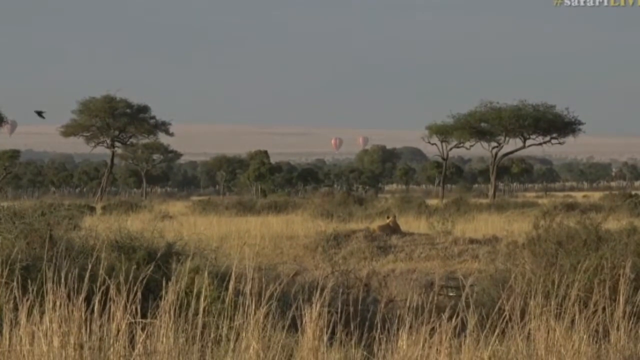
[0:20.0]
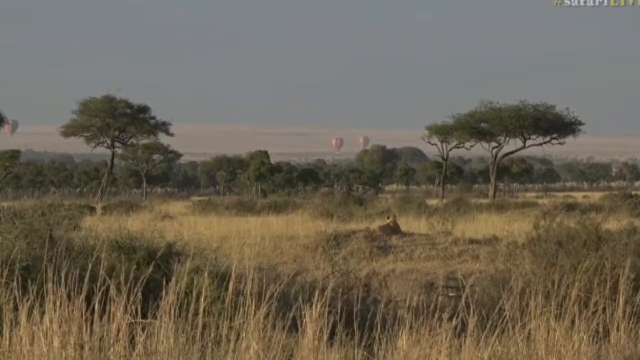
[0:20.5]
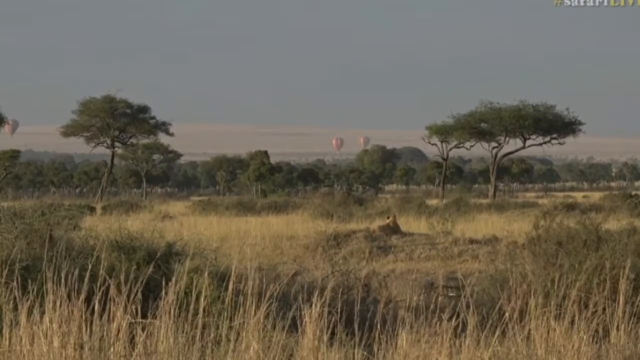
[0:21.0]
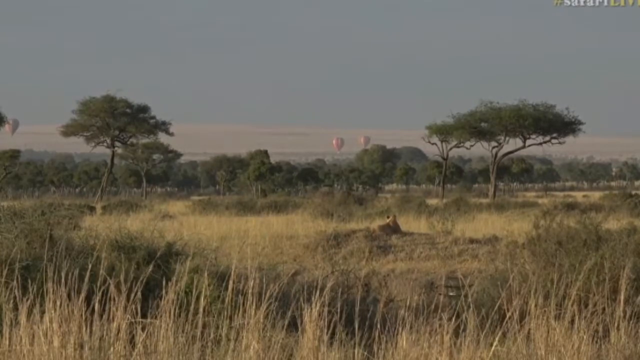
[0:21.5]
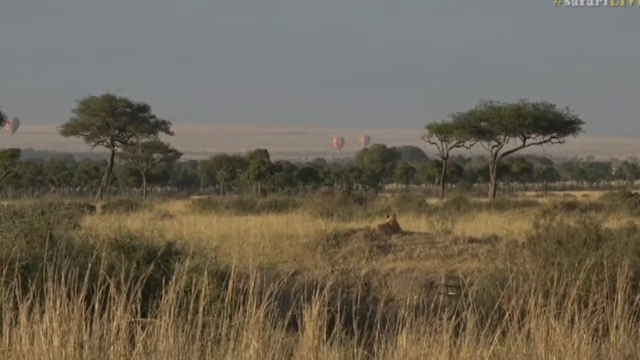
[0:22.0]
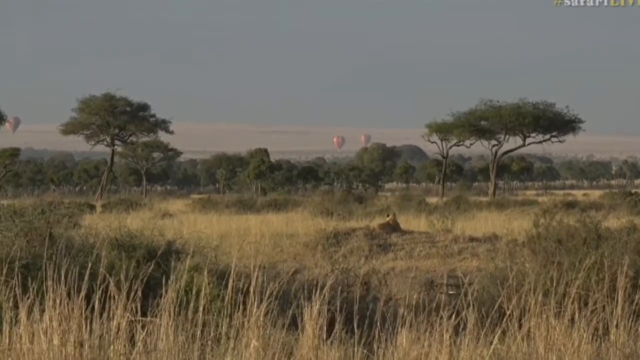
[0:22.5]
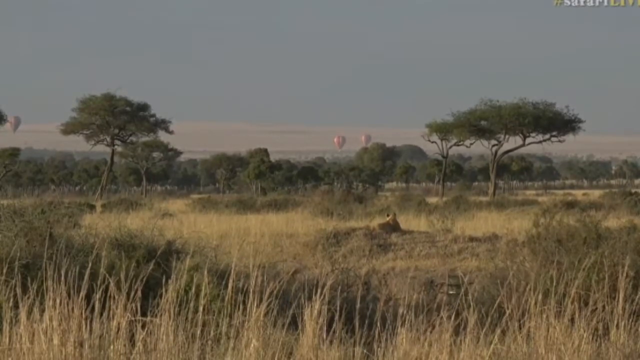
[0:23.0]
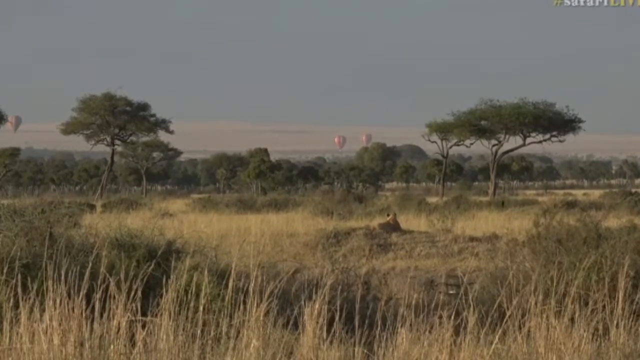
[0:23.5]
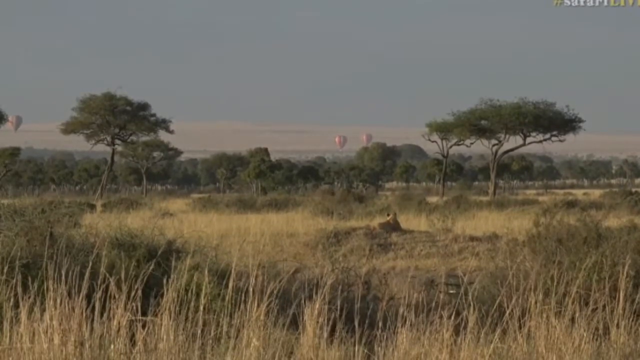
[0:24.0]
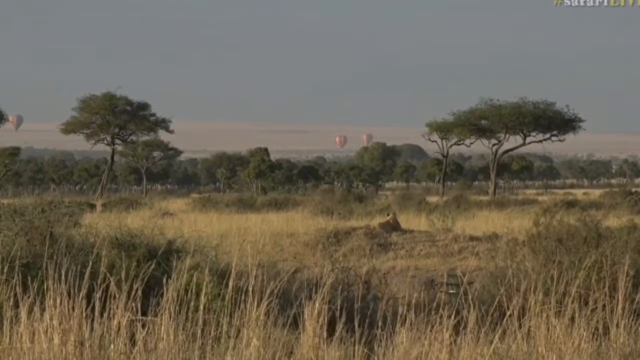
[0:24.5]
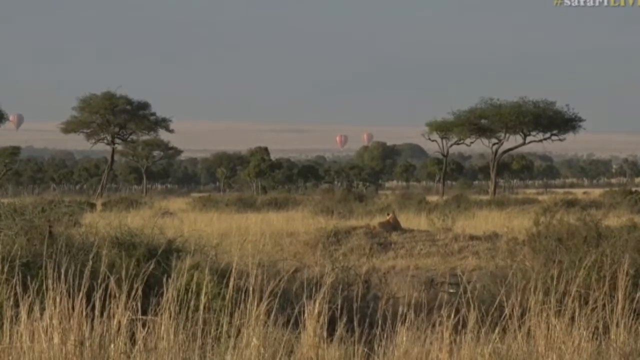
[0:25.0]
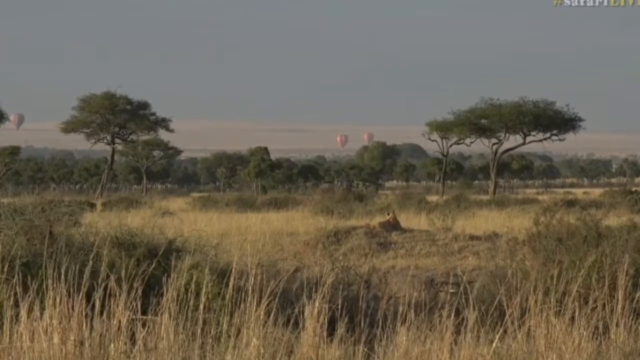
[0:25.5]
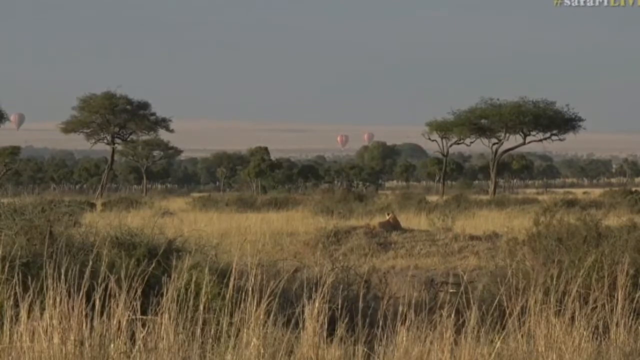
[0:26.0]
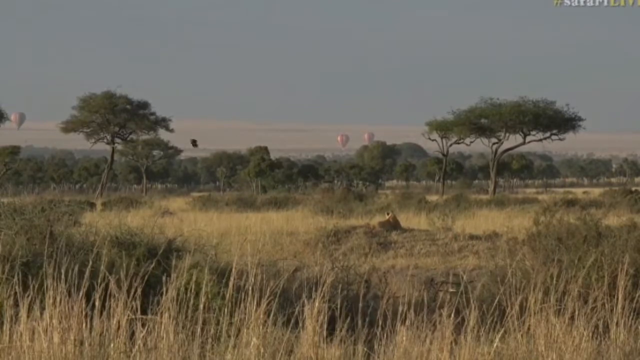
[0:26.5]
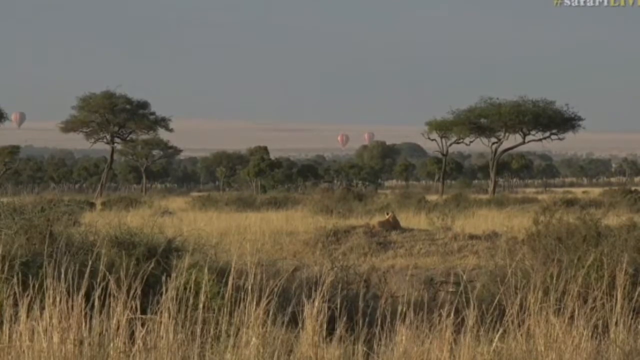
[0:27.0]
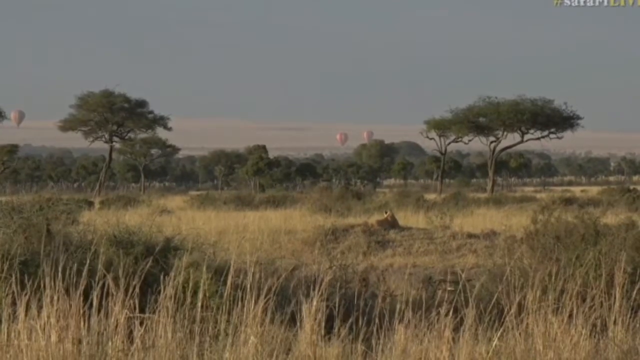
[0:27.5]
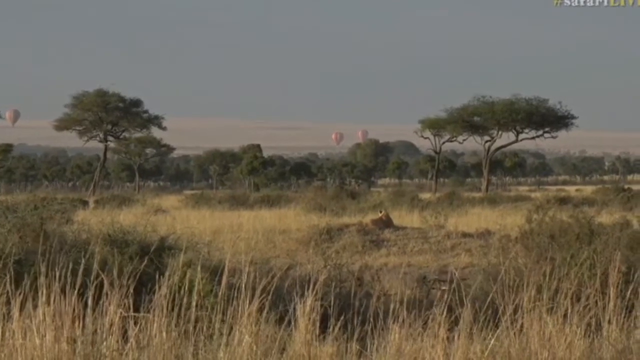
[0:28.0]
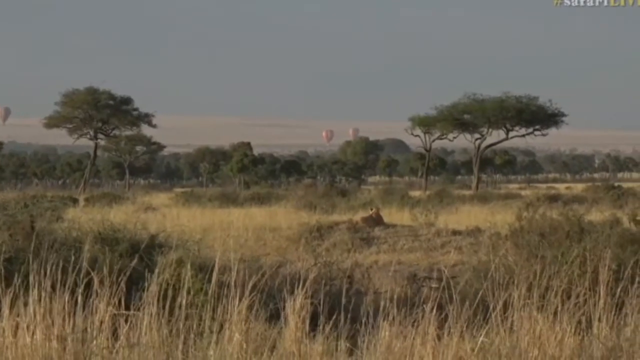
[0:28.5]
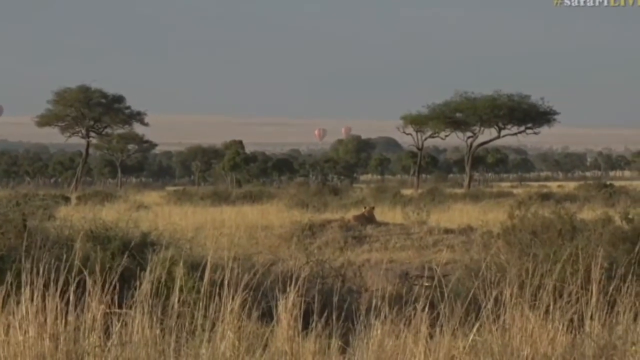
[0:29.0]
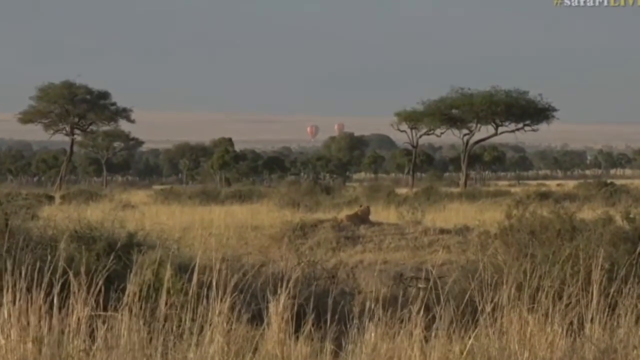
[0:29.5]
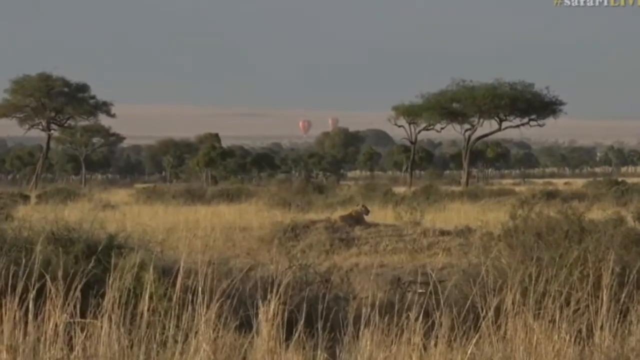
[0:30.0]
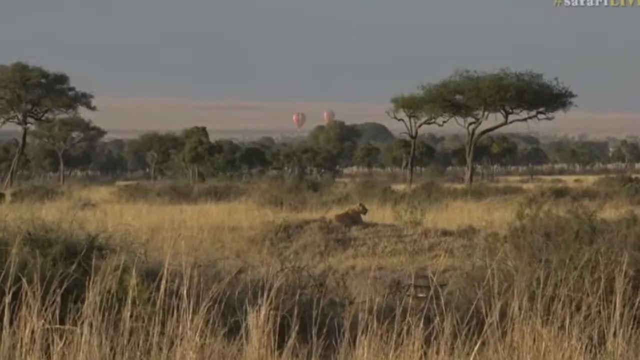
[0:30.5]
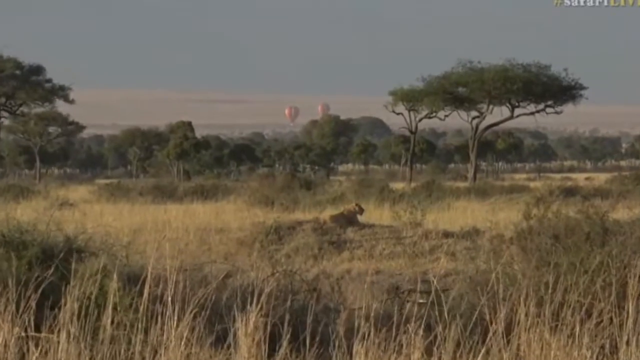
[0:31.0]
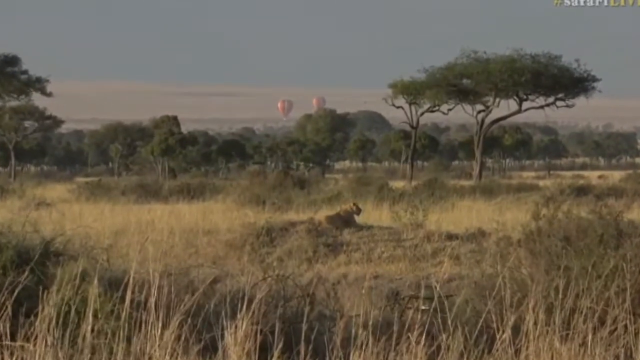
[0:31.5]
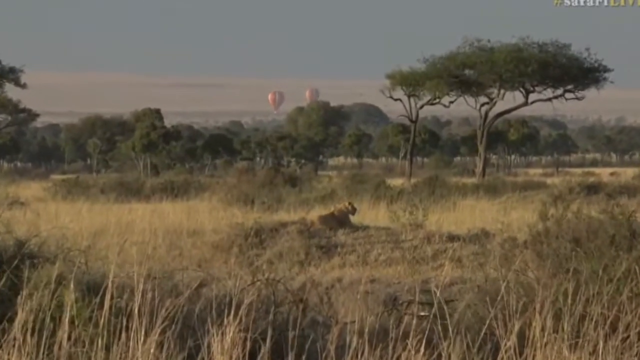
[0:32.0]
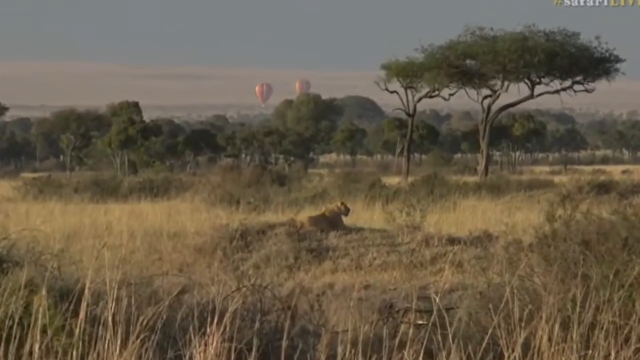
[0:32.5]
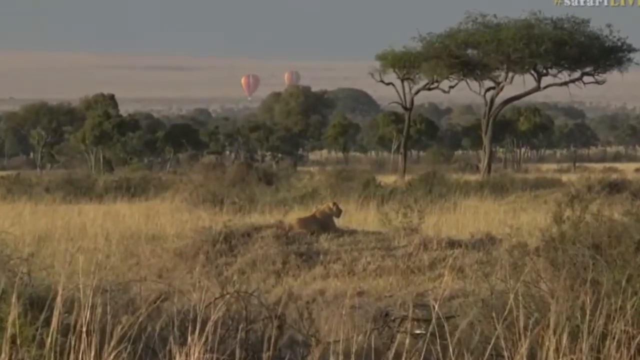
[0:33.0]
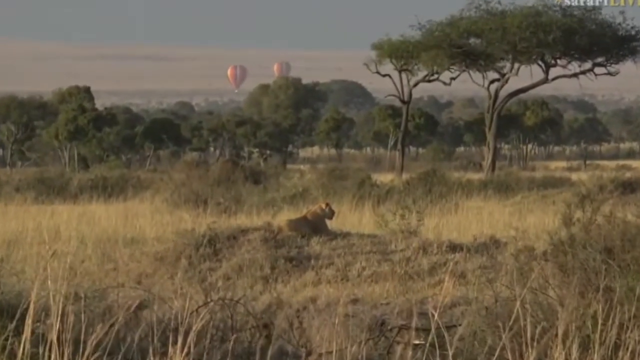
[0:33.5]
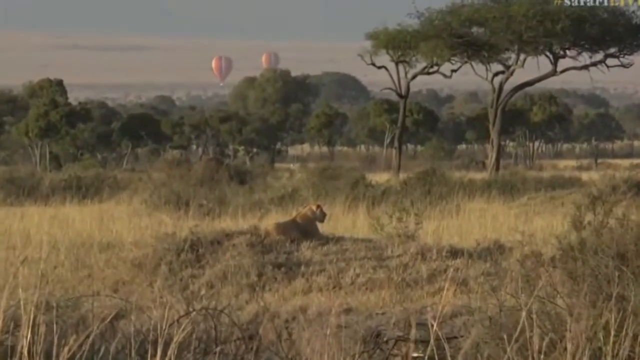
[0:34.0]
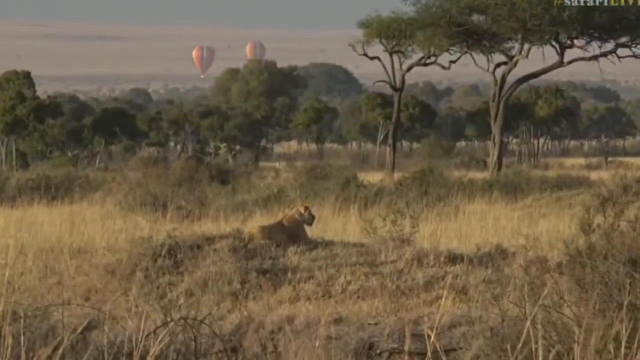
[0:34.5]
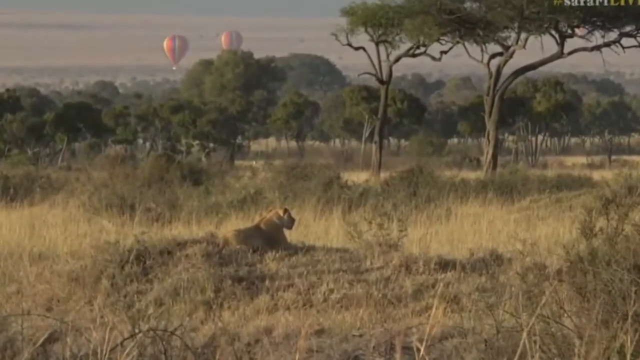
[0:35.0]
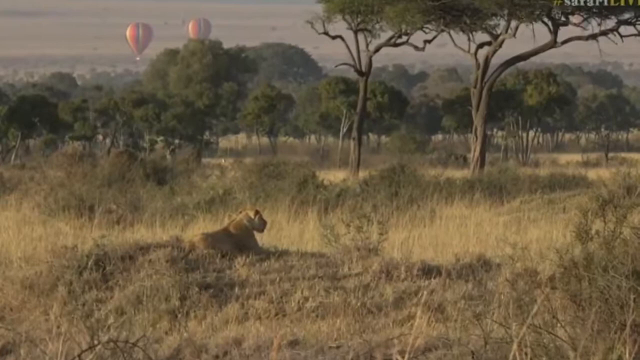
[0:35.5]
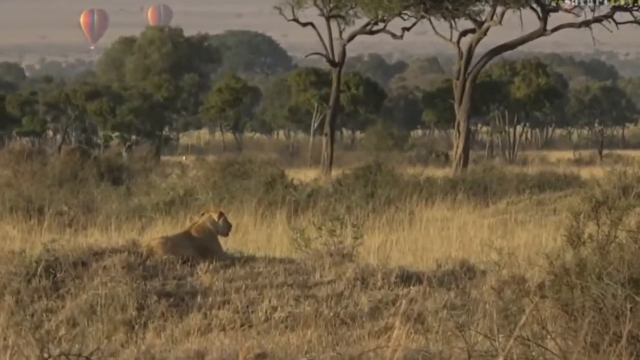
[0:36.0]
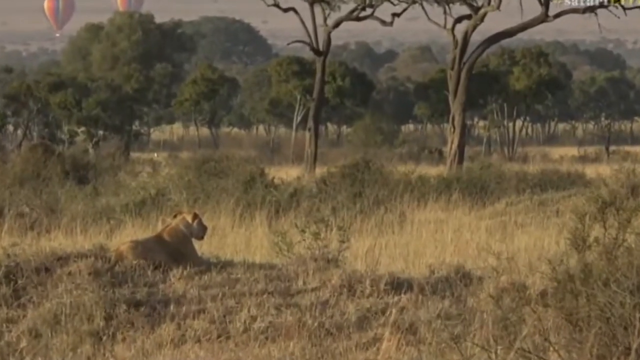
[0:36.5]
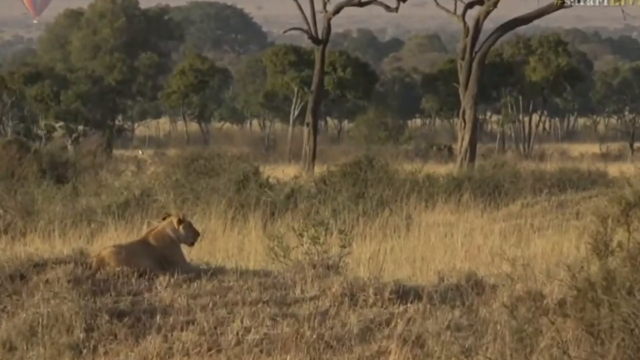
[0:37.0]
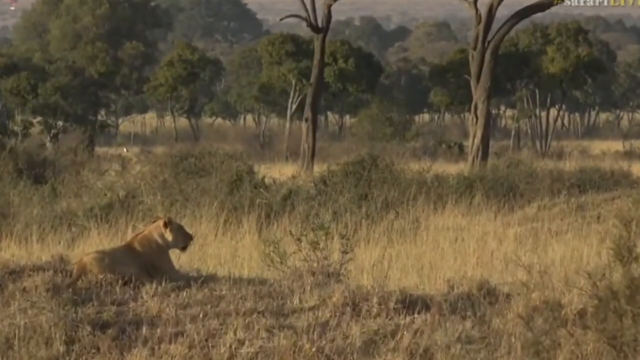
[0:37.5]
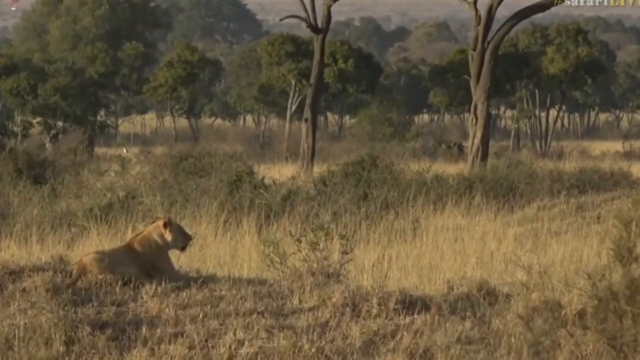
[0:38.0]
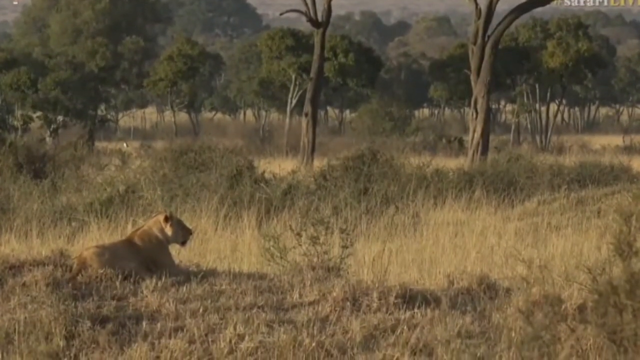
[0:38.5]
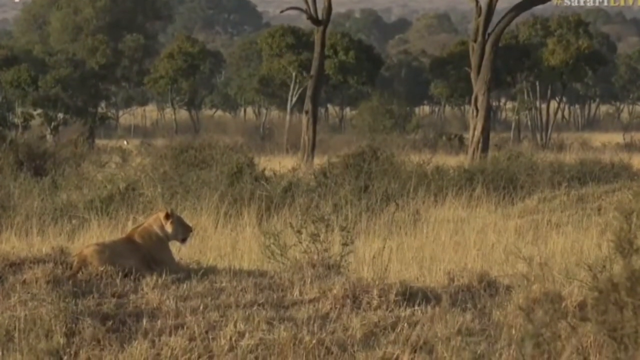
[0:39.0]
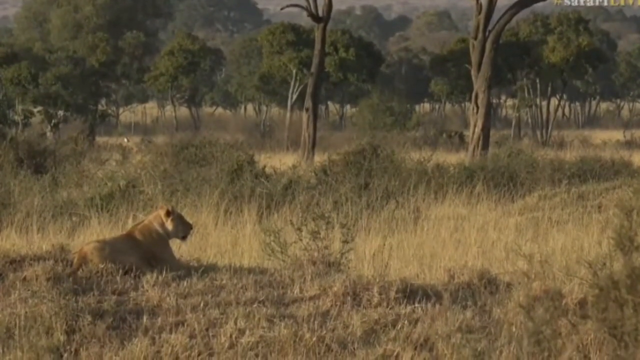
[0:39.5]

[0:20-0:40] An expansive scene in Africa. The camera pans in close to a lioness resting on a mound of earth in her territory. Hay-colored weeds surround the mound, and further out they are greenish-brown; everything is dry. There are mature trees with long trunks, expansive branches and sort of short tops. The sky is a very pale blue, and on the horizon there are thick clouds, like one long cloud. In the distance are two red and white helium balloons of the kind that carry people. Birds fly around just above the weed line. In the upper right corner is the word "Safari". The lioness sits on the mound of earth, scanning 180 degrees, as if she owns the area. The land stretches far out to the horizon.